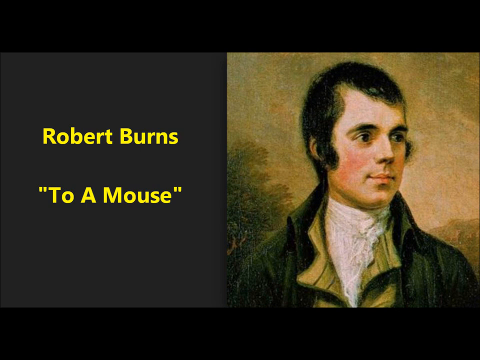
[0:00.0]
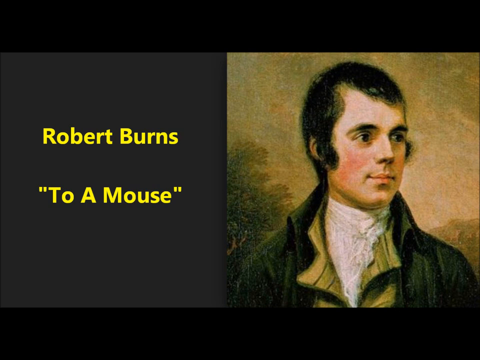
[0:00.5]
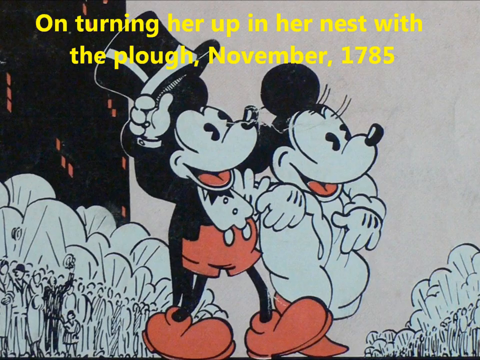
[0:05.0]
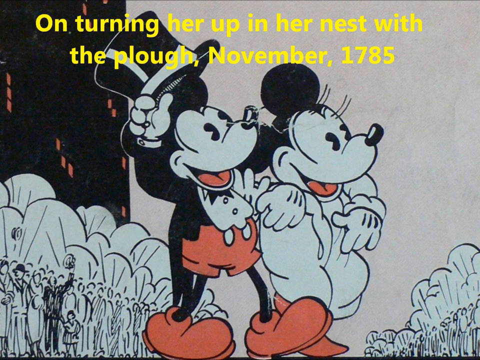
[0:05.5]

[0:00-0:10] On one side of the screen, yellow text reads "Robert Burns" and "to a mouse." On the right side is a painting of a man, kind of dressed formally, that looks like a picture from around the 1800s. He has black hair, long sideburns and no facial hair, and wears a coat with a kind of frizzy white shirt in the middle and a yellow shirt with a collar sticking out. He is looking towards his left. Next comes a picture of Mickey and Minnie Mouse, with some yellow text at the top of the screen.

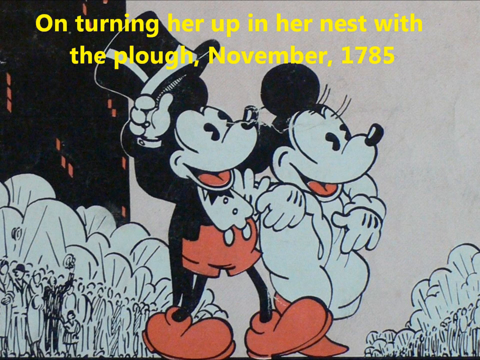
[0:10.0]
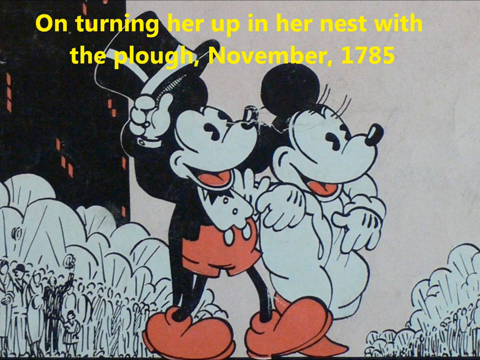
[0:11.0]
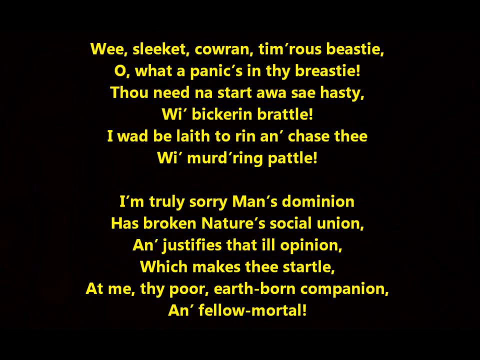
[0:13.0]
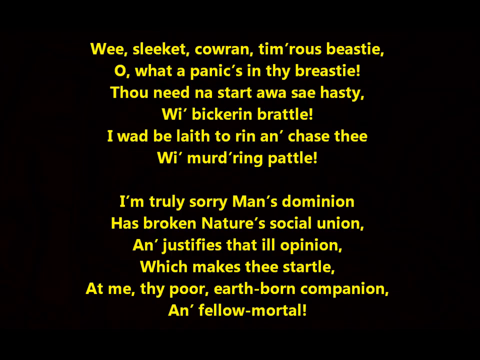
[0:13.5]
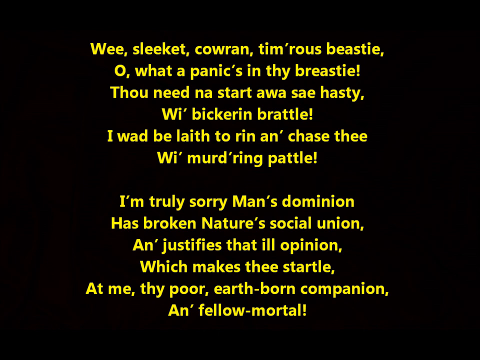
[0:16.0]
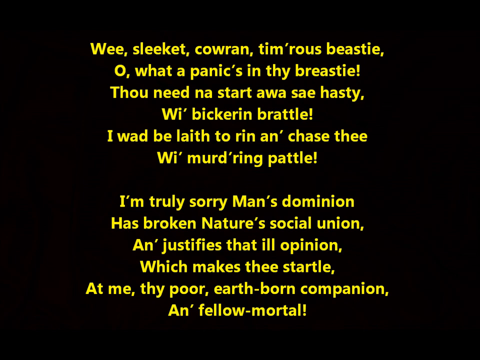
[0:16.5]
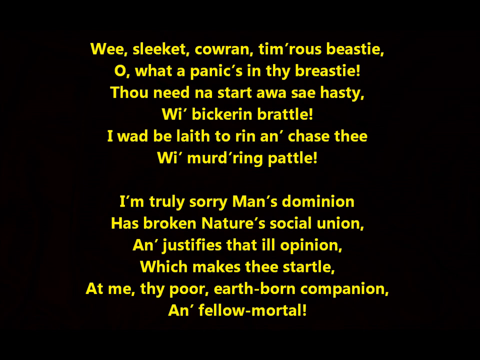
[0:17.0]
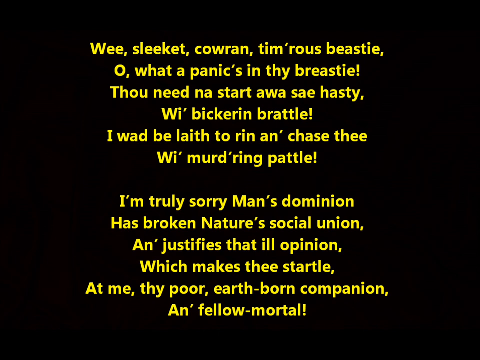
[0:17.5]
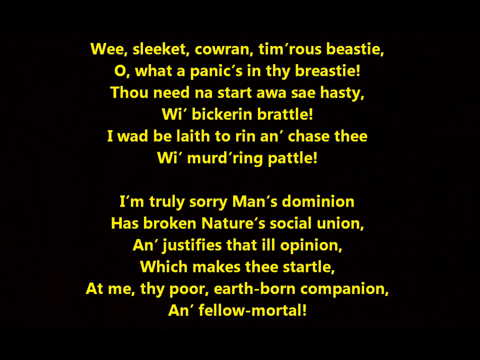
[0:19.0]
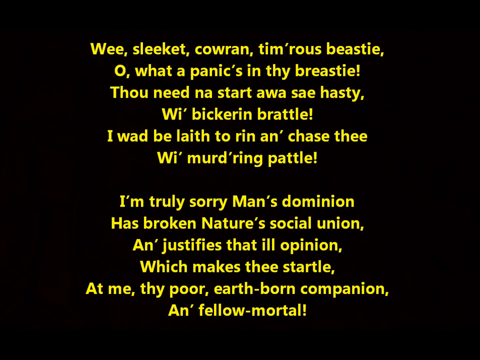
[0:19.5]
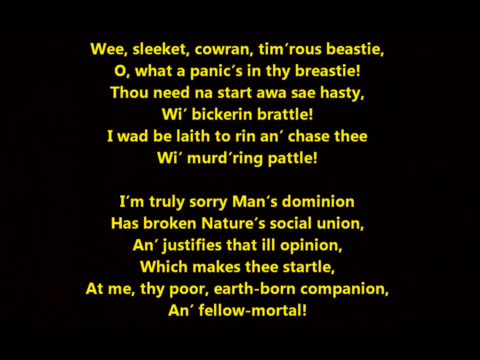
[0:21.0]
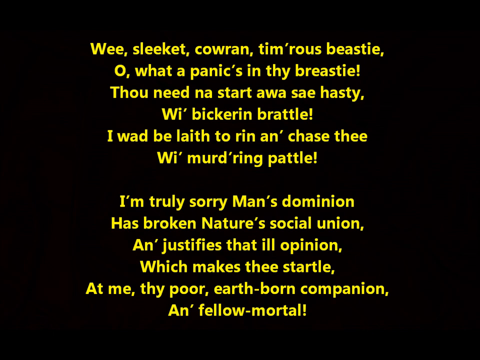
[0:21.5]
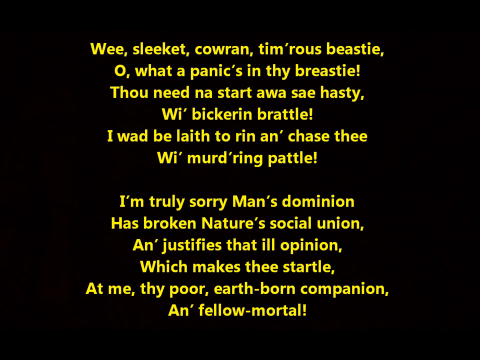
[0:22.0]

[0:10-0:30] Mickey Mouse and Minnie Mouse hold each other's arms, kind of locked together. Mickey's right arm holds his hat, and he seems to be saluting somebody with it. Both are kind of facing the right of the screen. Yellow text at the top reads "on turning her up in her nest with the plow, November, 1785." The video then cuts to a screen of yellow text that looks like either poetry or song lyrics, including "oh what a panic's in thy breastie. Thou need not start." The writing seems to be some kind of slang, though some of the words are in ordinary English.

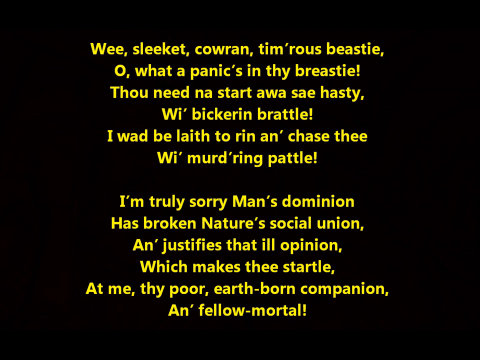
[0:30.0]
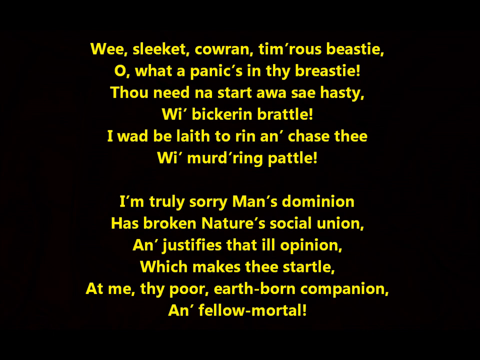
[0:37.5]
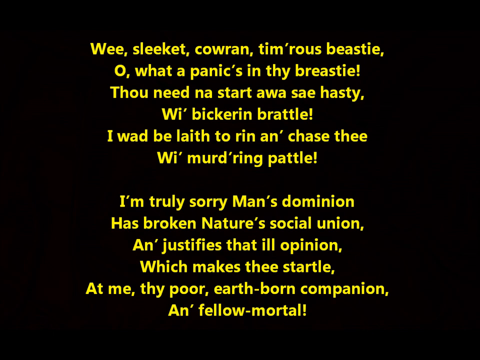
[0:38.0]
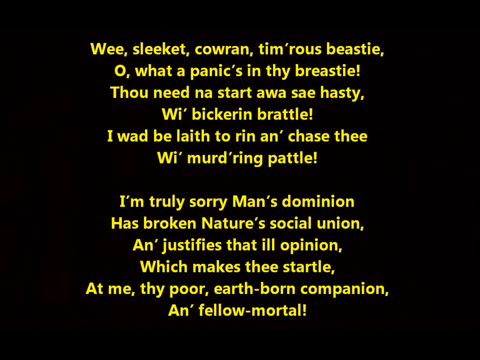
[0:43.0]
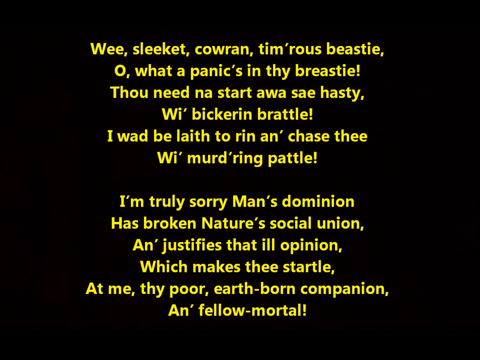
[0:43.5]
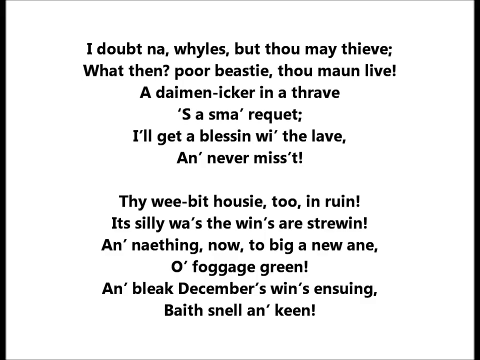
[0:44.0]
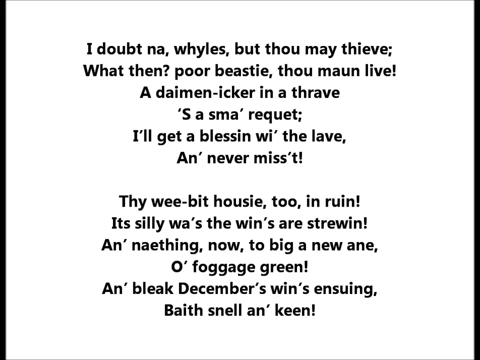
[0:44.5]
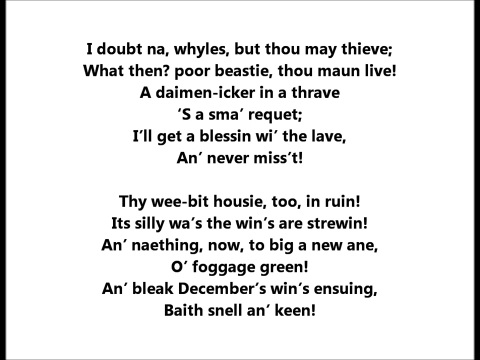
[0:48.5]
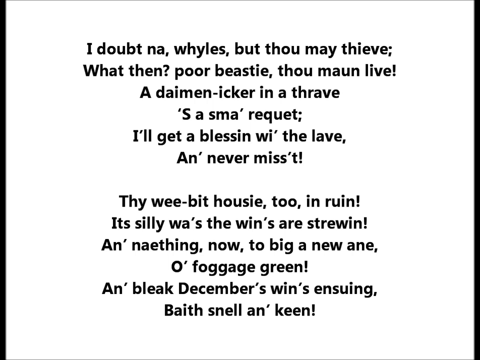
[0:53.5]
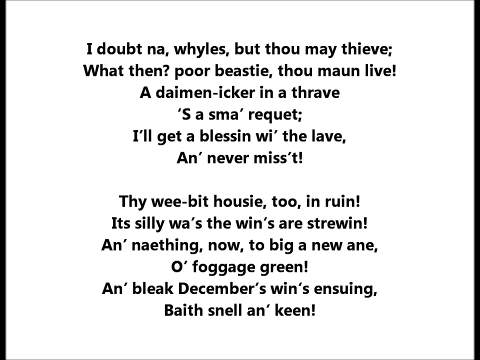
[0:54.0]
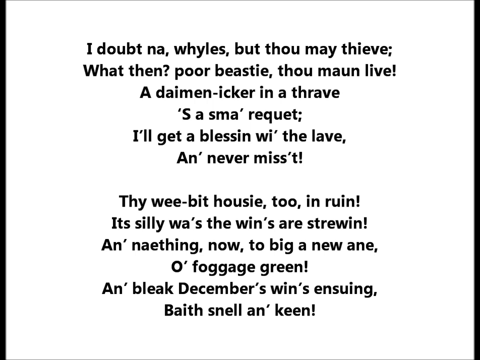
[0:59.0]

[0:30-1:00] Yellow text on a completely black background appears to be either song lyrics or a poem, written partly in unusual words and partly in plain English. Some of the text reads "which makes thee startled at me, thy poor earth-born companion and fellow mortal." The text then turns black and the background turns white, showing more text that begins "I doubt not" and keeps continuing; the words are very hard to understand. The video then cuts back to yellow text on a black background, some of which reads "I'm truly sorry man's dominion has broken nature's social union."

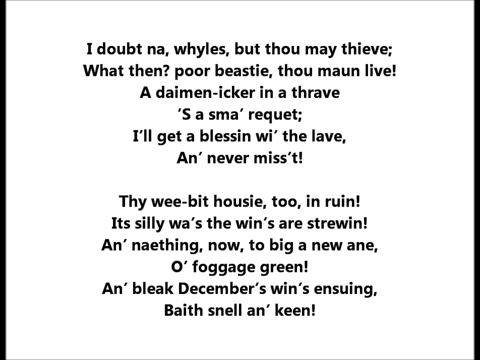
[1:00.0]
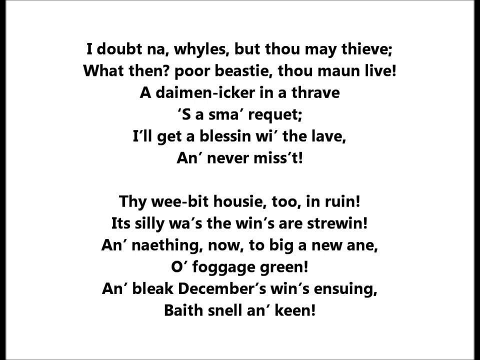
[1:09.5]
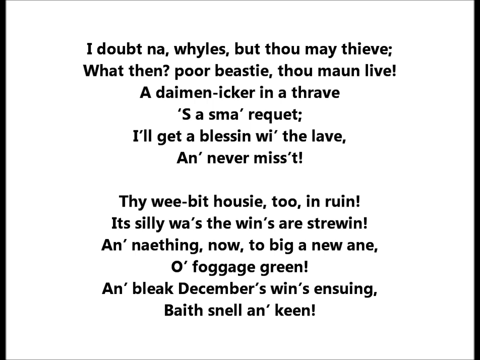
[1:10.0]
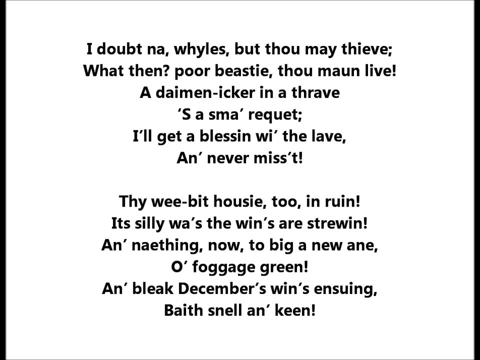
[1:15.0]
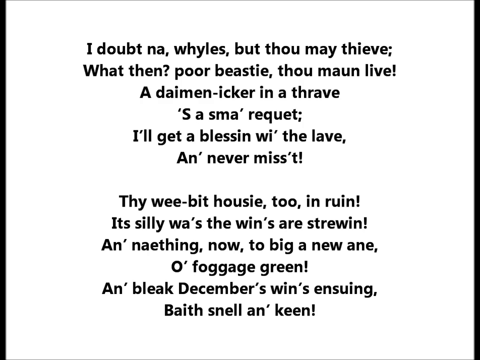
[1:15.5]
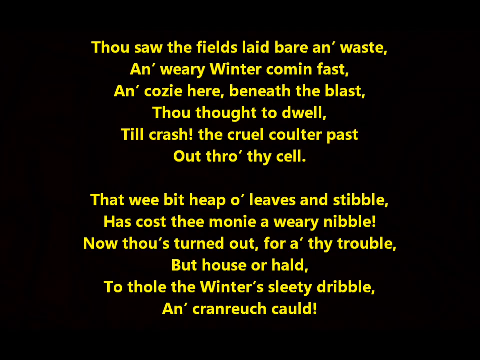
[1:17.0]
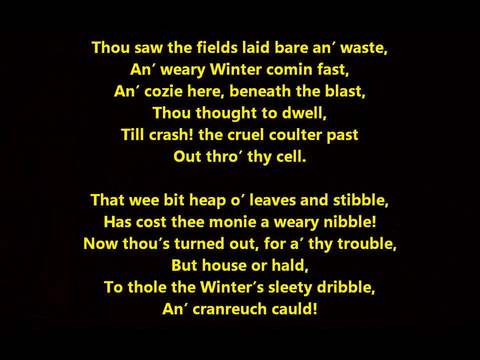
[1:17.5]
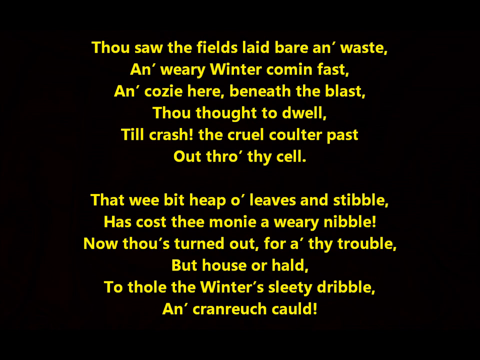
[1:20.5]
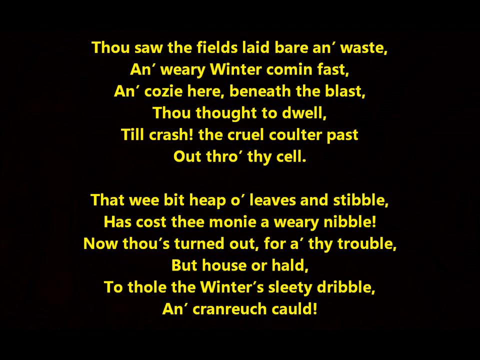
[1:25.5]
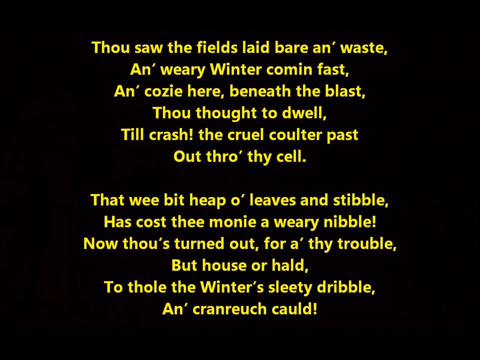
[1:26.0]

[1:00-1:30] Black text on a white background seems to be either song lyrics or a poem, with some words in plain English and others seeming to be slang words that are very hard to understand. It begins with a line starting "I doubt," and the text is kind of broken into two paragraphs. The screen then switches to yellow text on a black background. At the top it reads "thou saw the fields laid bare in waste," and after a break another paragraph begins "that wee bit heap o' leaves and stibble."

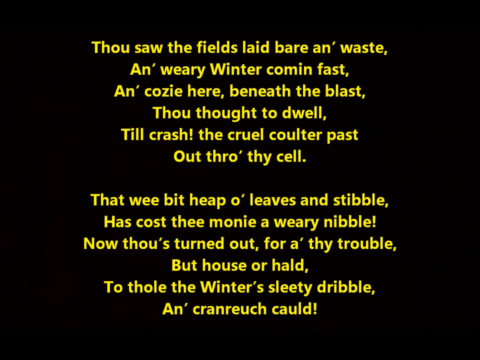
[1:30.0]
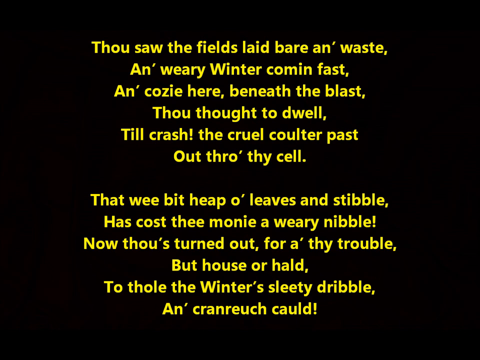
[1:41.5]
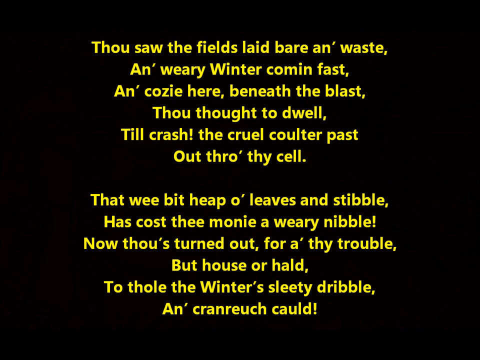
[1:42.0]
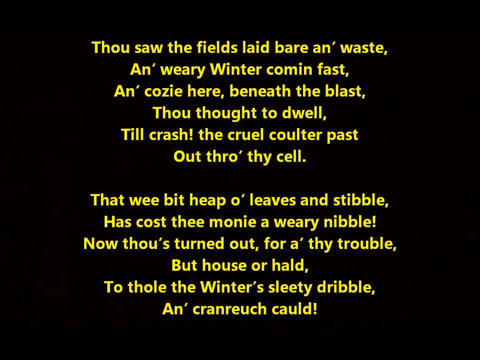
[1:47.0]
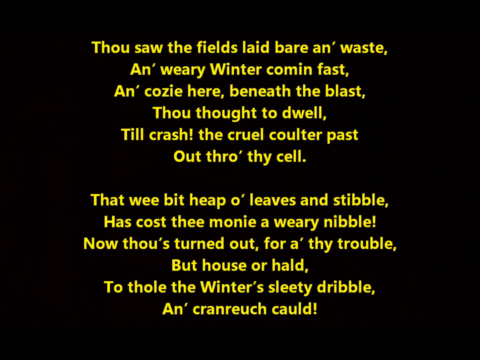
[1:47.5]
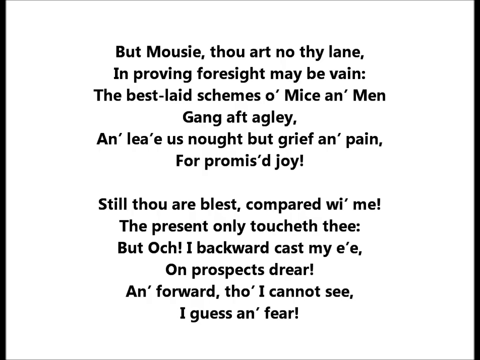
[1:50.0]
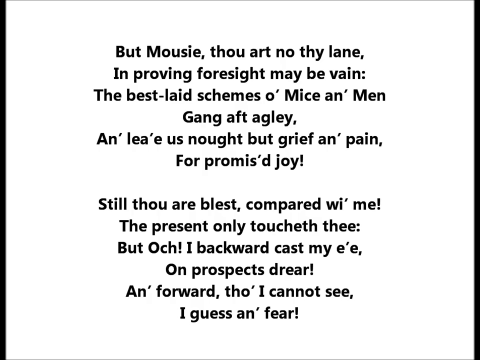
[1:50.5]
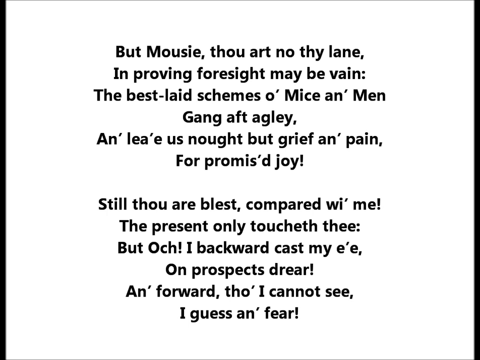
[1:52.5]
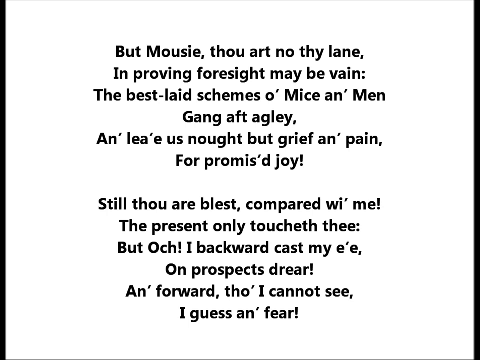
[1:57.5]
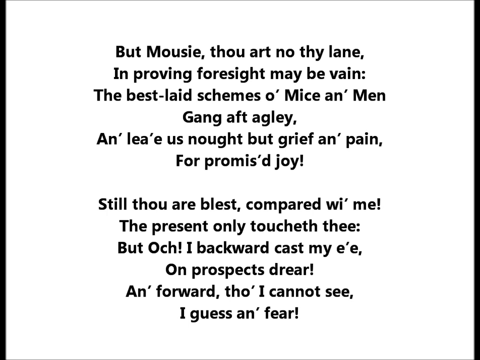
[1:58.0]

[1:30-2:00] Yellow text on a completely black background seems to be spaced into two sections that kind of look like paragraphs, with the text shaped more like a poem or song lyrics. At the top it reads "Thou saw the fields laid bare and waste," and the second line reads "and weary winter coming fast." After a break, another paragraph begins "Thou wee bit heap o' leaves and stipple." The video then cuts to black text on a white background, where the poem or lyrics seem to continue with a line beginning "but now see thou art" and including "foresight may be vain." After a space, another paragraph starts "still thou are blessed compared wi' me."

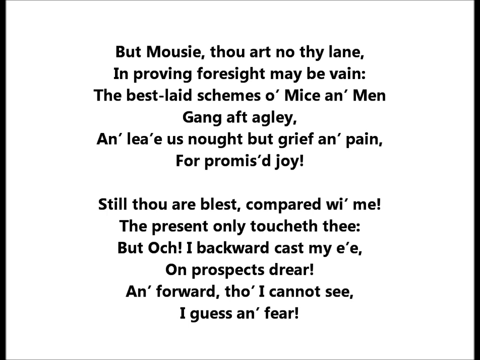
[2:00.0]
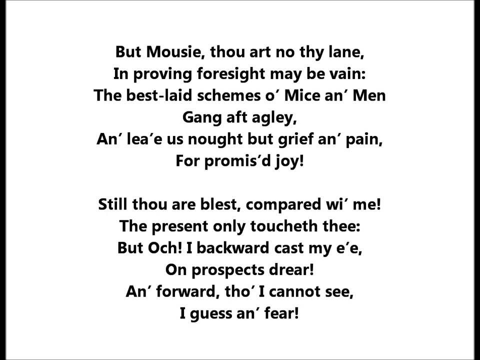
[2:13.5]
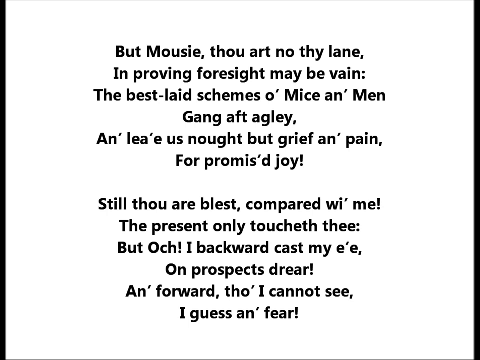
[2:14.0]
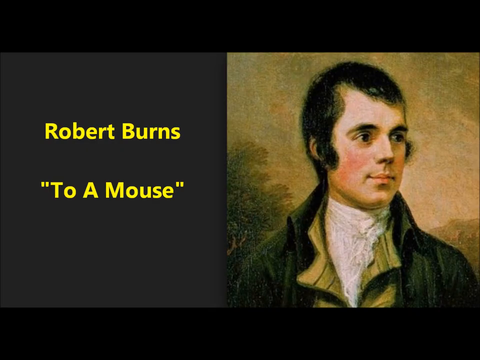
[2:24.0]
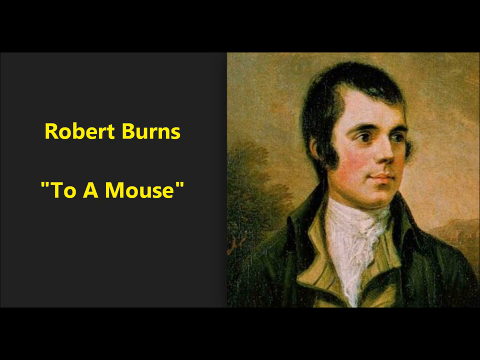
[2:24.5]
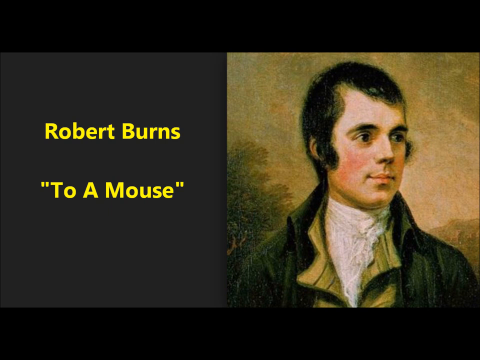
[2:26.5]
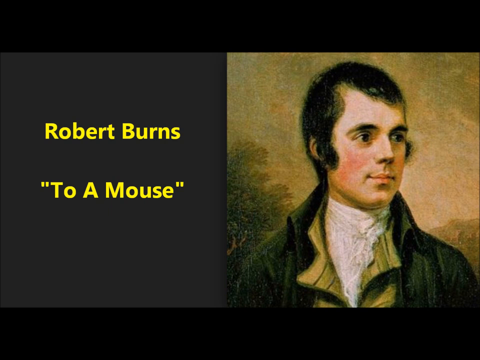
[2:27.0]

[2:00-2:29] Black text on a white background appears to be either a story, song lyrics or poetry. It begins "but now see thou art, know thy lane, improving foresight may be vain, the best laid schemes of mice and men, gang aft," and continues for another two lines. After a space, what seems to be a new paragraph reads "still thou art blessed compared with me, the present only touches thee," and continues, apparently ending with "and fear." The video seems to remain on that slide, then cuts to another slide with yellow text on the left side against a black background reading "Robert Burns" and, in quotation marks, "to a mouse." On the right side is kind of a picture of a man, like a painting from around the 1800s, dressed like a person from that era in a coat, a yellow shirt with a collar underneath, and a frizzy white shirt without a collar underneath that.